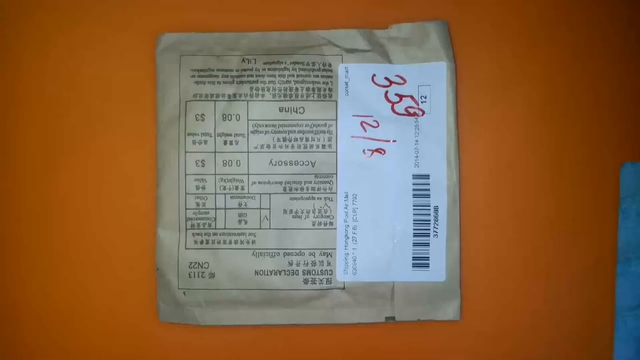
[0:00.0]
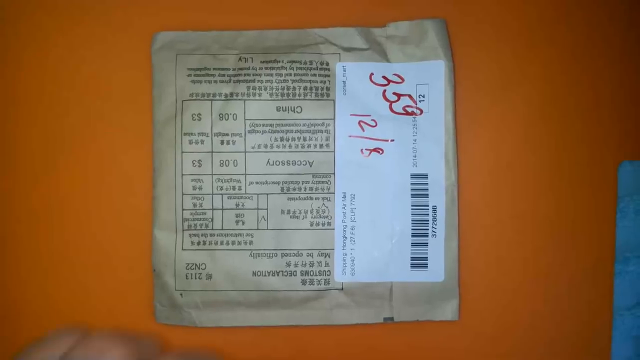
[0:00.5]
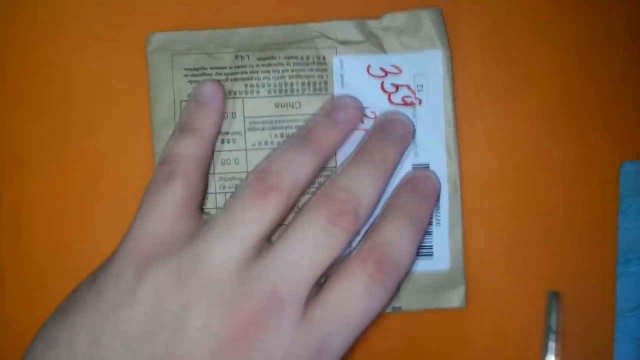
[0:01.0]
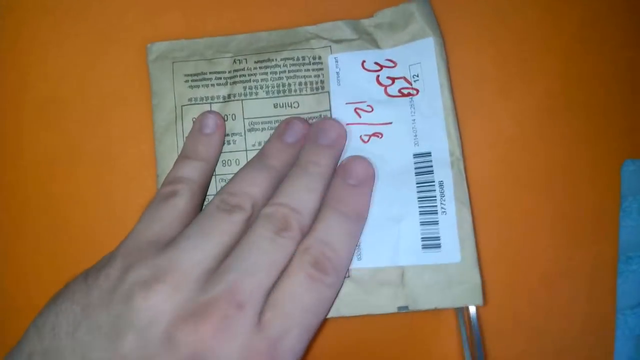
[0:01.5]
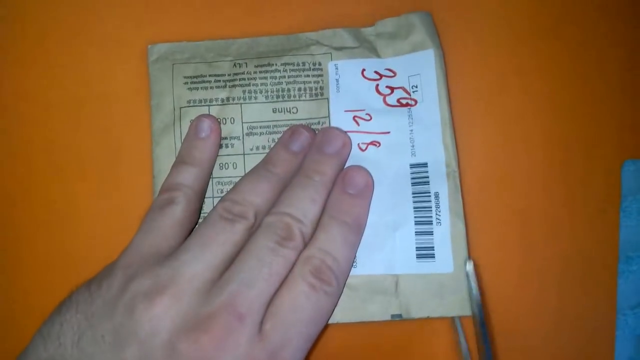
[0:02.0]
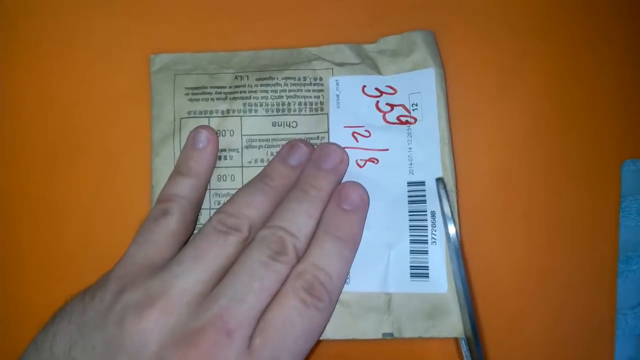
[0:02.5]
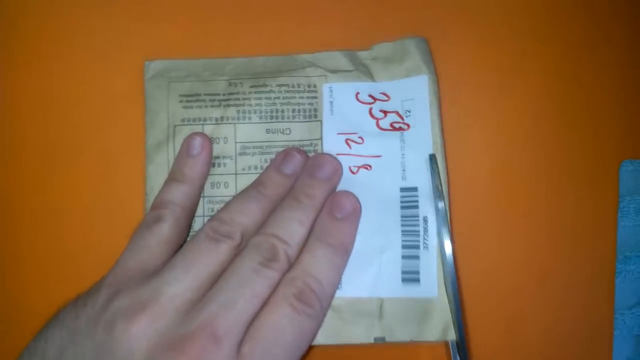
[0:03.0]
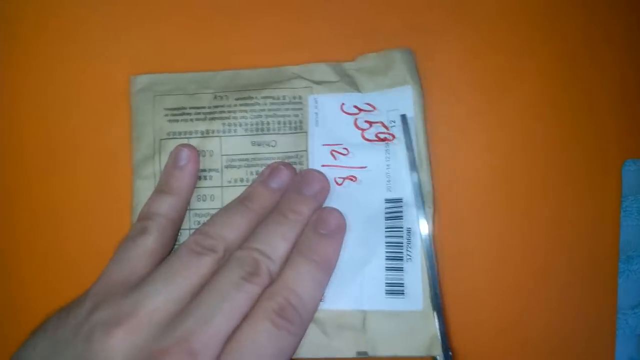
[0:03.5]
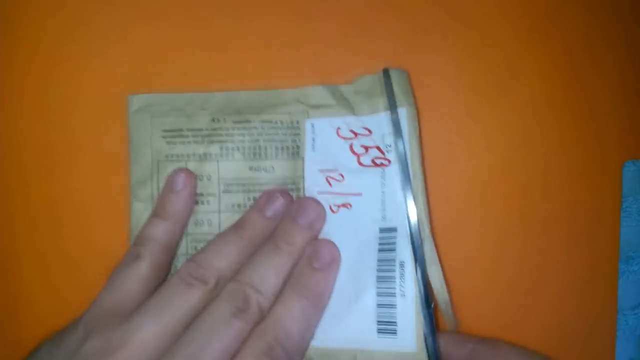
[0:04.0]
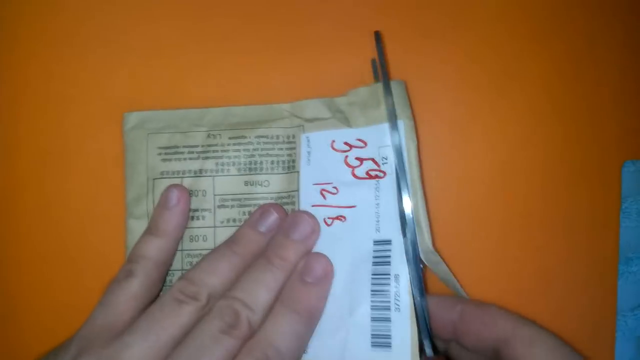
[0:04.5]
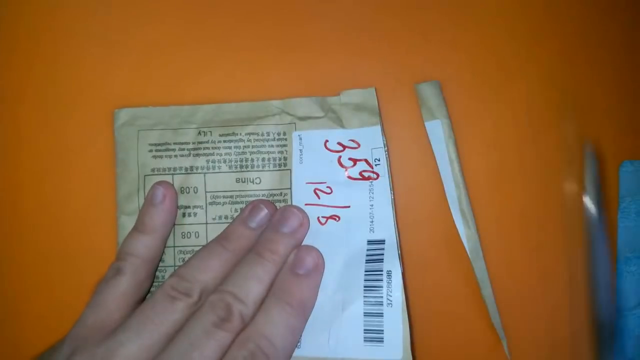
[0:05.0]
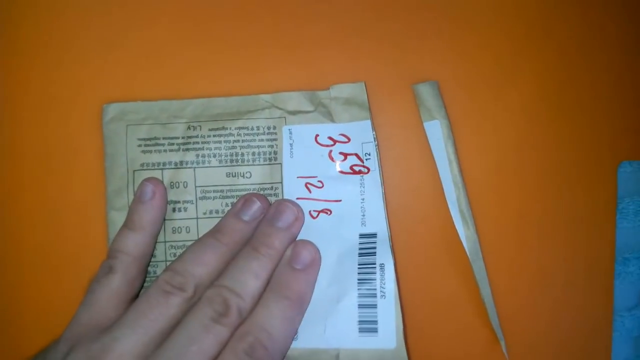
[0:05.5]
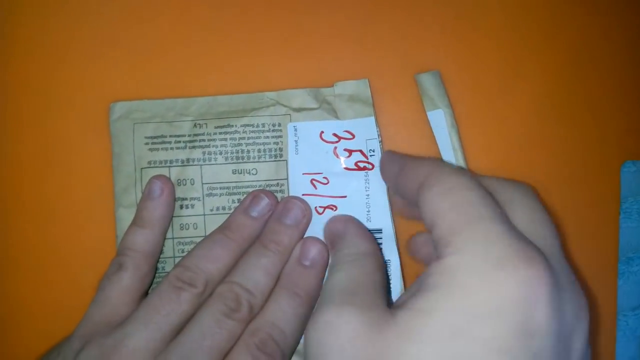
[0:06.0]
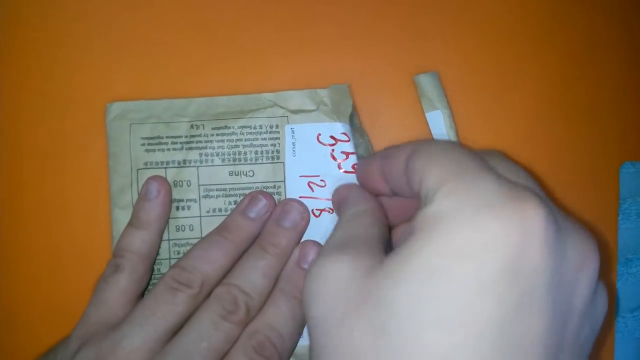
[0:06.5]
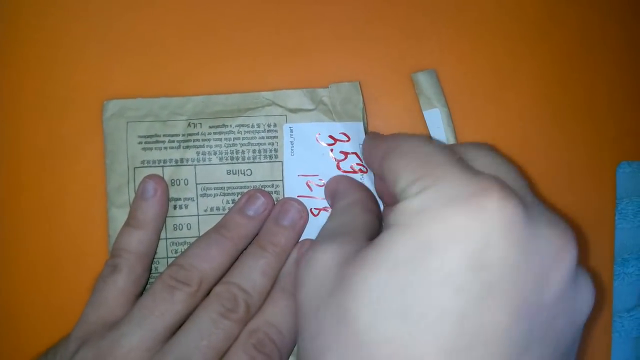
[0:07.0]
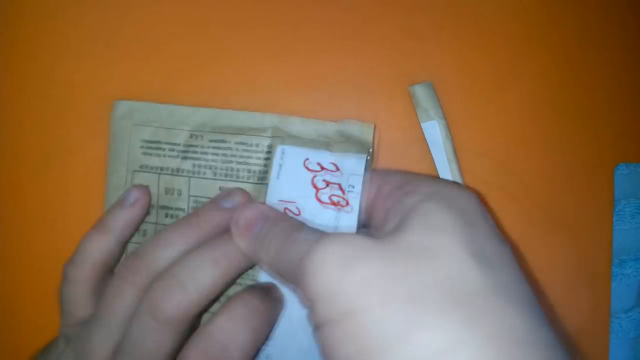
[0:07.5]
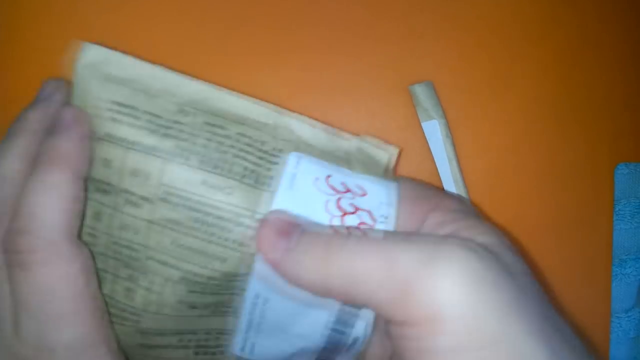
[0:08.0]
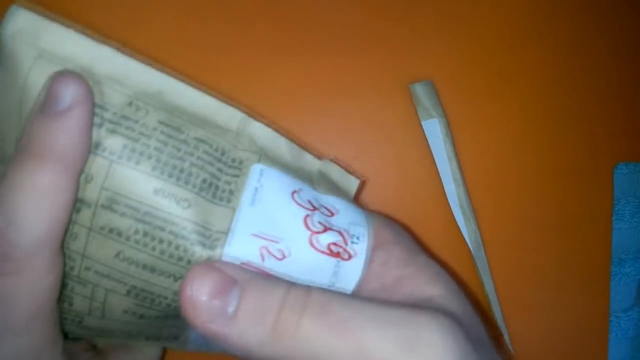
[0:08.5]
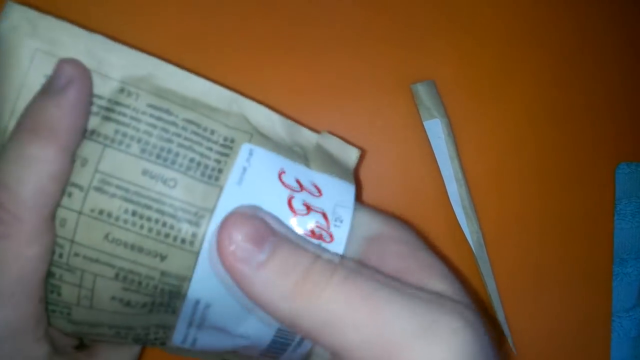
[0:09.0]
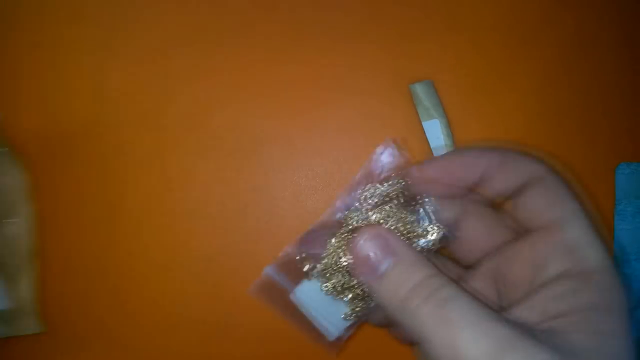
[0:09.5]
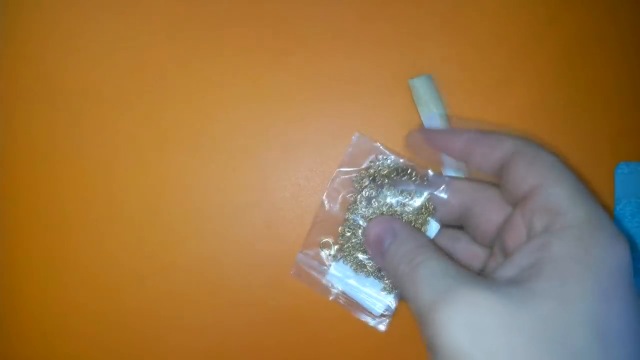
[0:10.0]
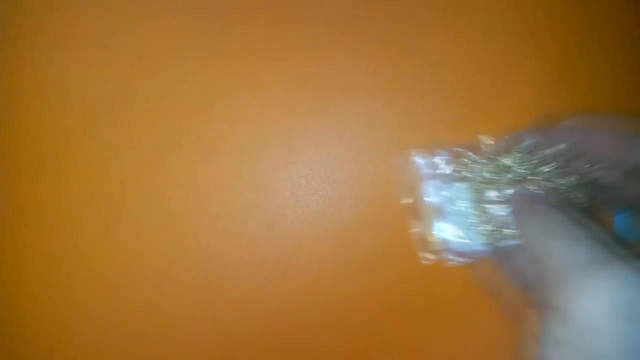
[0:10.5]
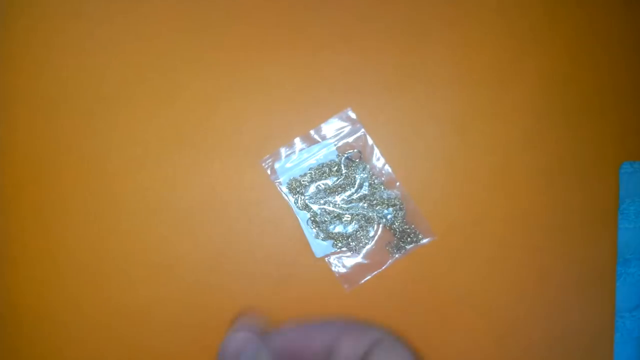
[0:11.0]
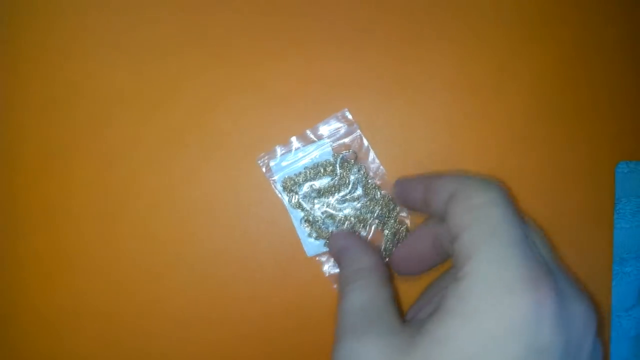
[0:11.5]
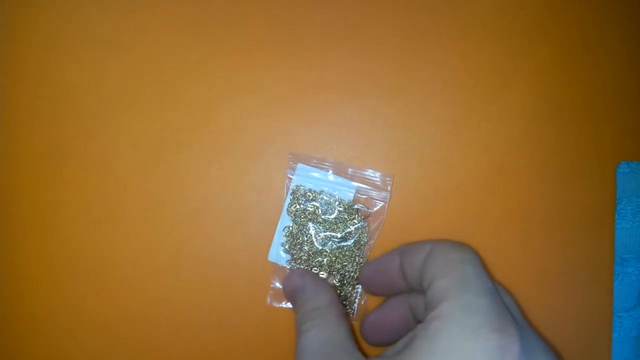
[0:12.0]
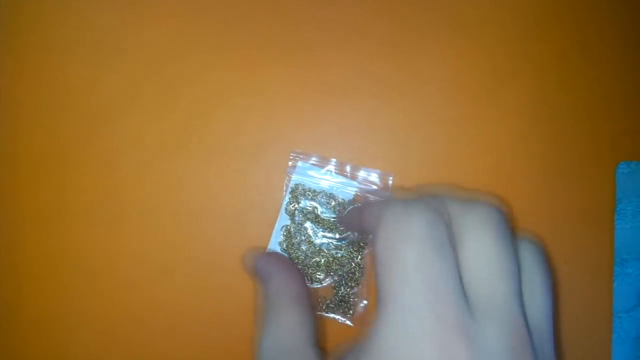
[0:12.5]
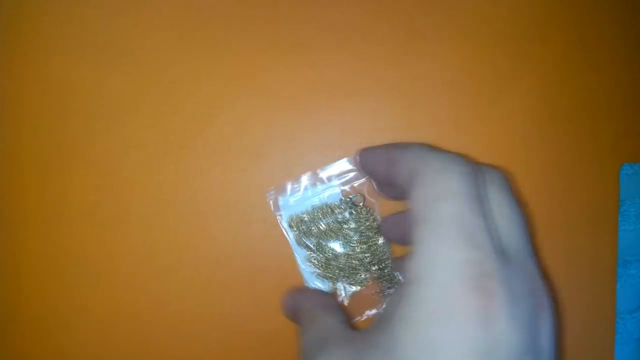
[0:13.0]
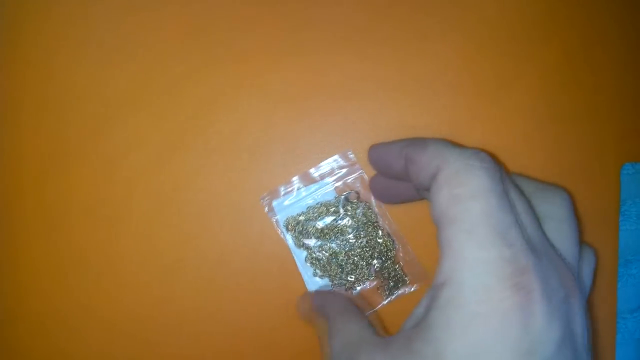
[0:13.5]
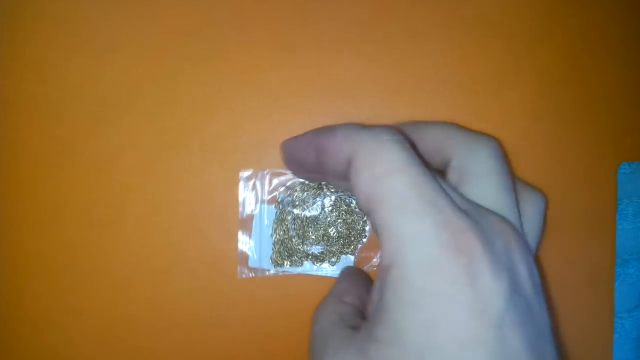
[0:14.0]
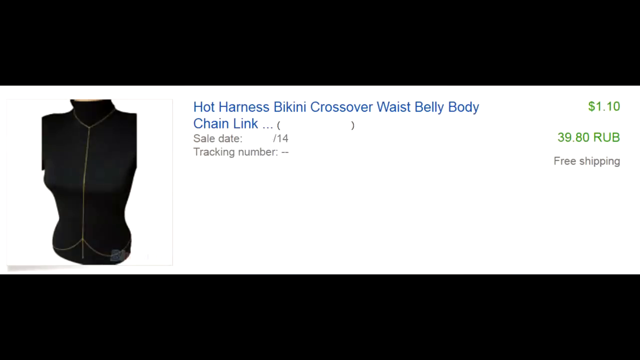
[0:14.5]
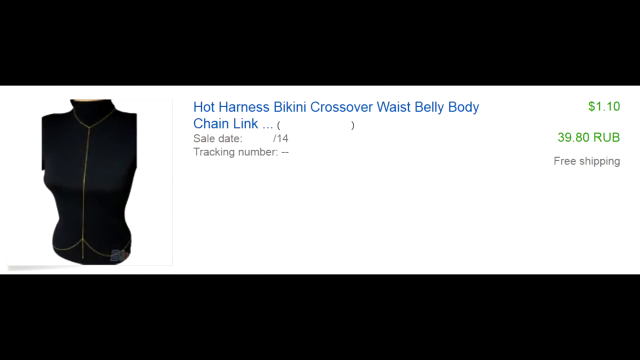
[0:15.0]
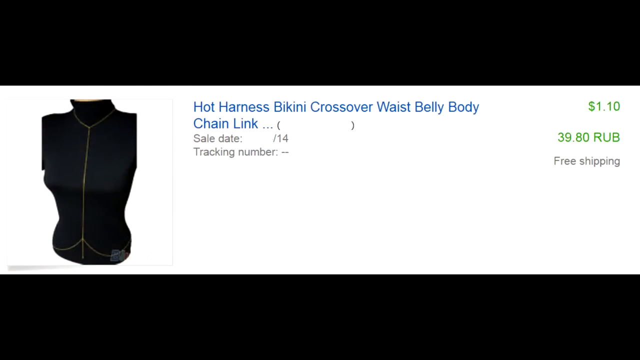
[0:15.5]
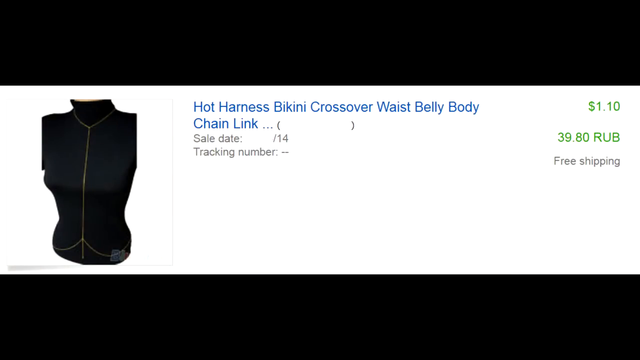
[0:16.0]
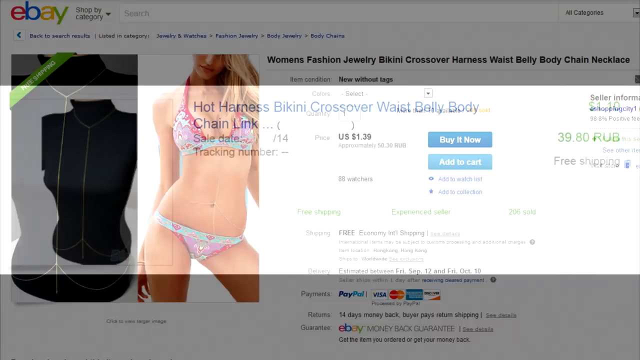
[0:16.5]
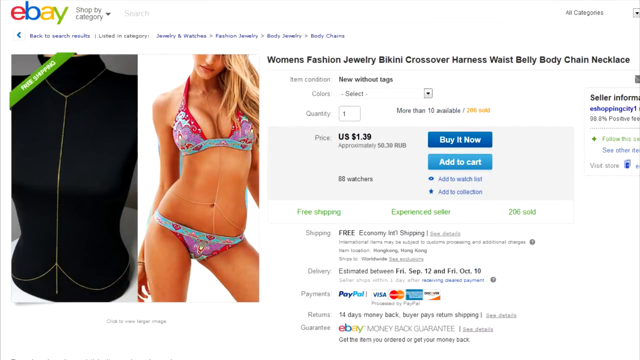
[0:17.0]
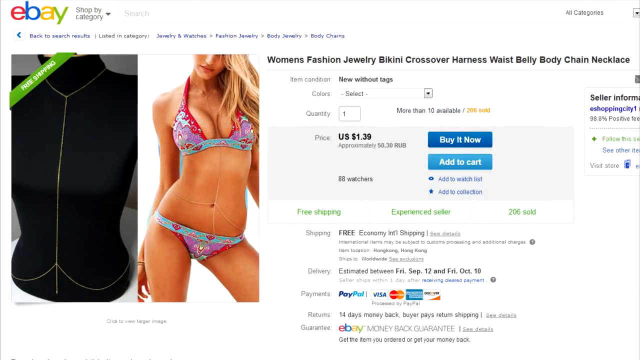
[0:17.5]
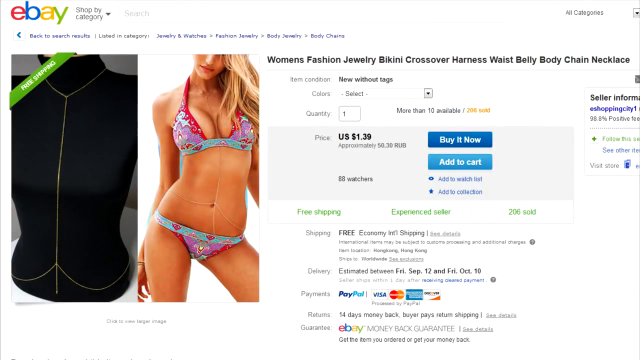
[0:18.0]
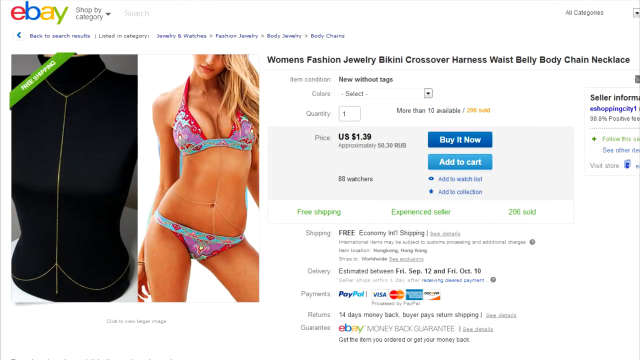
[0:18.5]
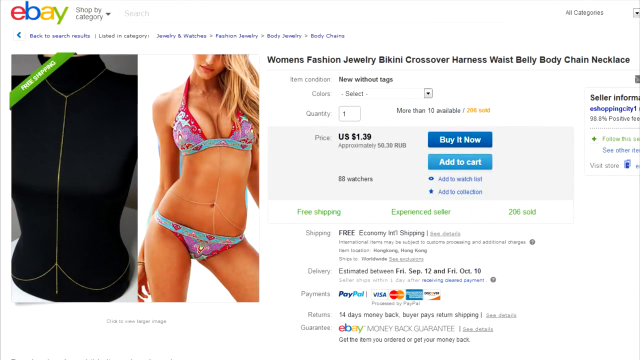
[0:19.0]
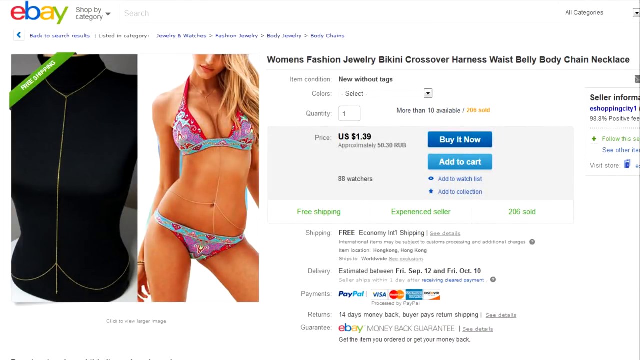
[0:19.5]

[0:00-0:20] A square package with a large amount of Chinese writing on it is shown. The package is essentially a flat envelope made of some kind of card craft paper. On it is a rectangular white label with a barcode and English text, and someone has written "35912-8" in red marker on the label. A left hand reaches in from the bottom left corner, lifts the bottom of the package with its thumb, and a pair of scissors comes in from the bottom right corner to slowly cut open the right-side end of the package. The person then reaches into the package with their right hand and pulls out a small plastic bag with a zip seal on one end, containing a gold-colored chain object.